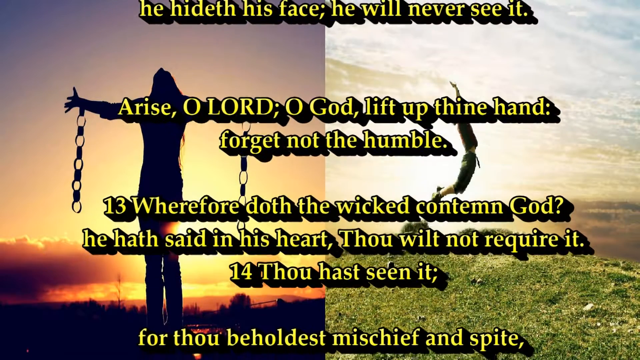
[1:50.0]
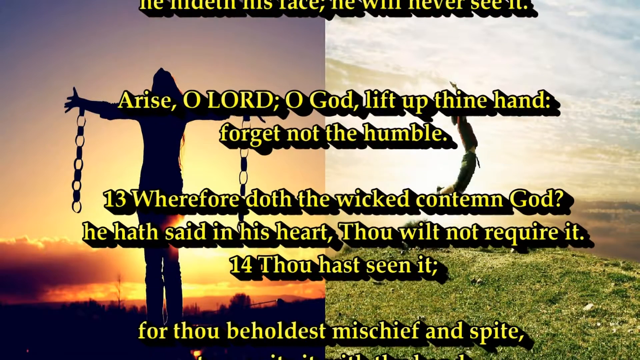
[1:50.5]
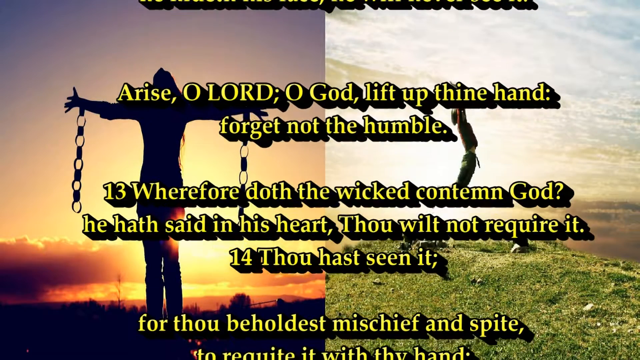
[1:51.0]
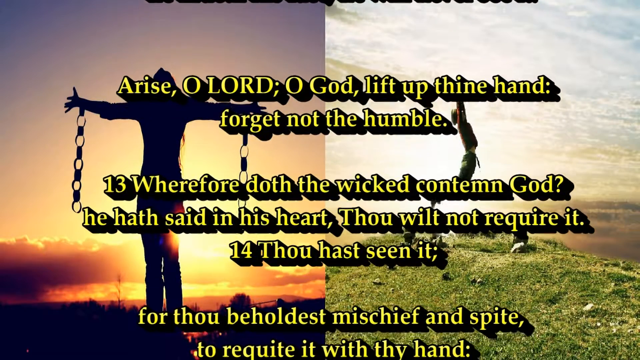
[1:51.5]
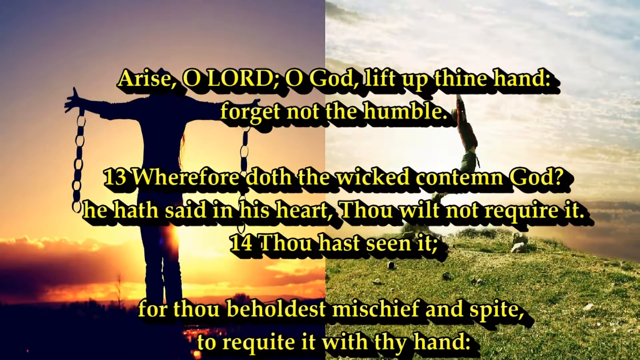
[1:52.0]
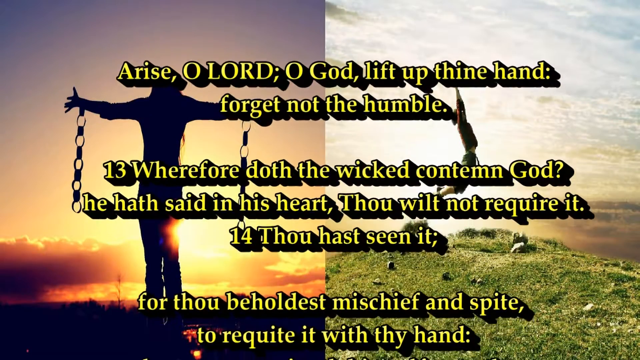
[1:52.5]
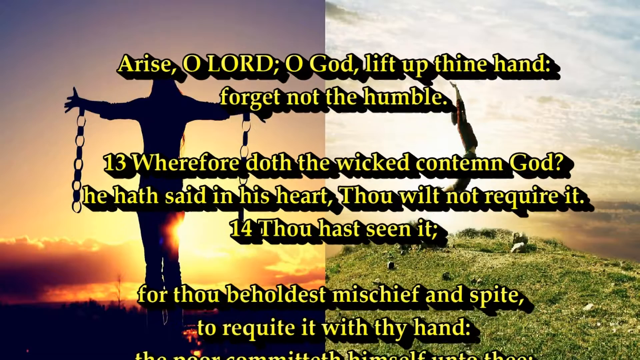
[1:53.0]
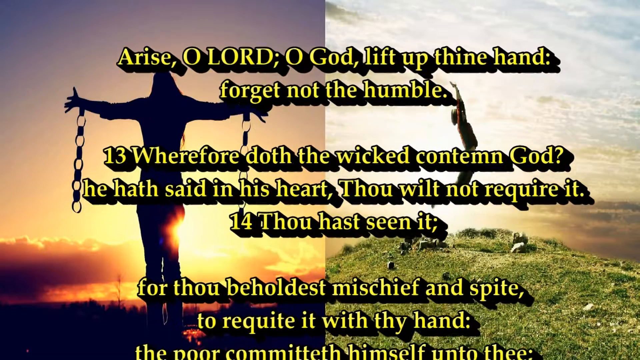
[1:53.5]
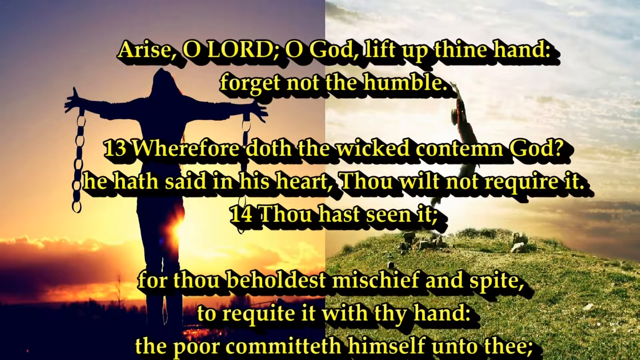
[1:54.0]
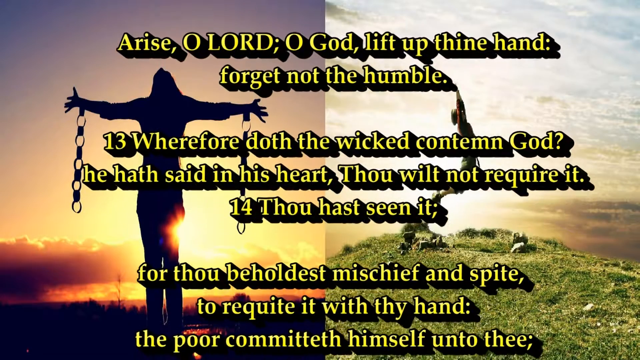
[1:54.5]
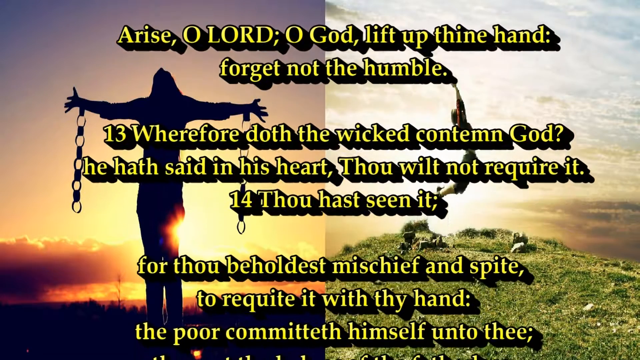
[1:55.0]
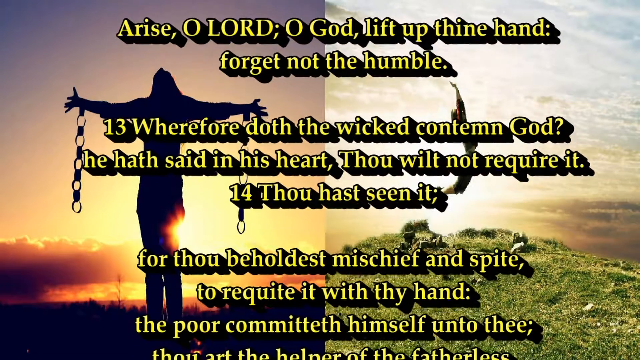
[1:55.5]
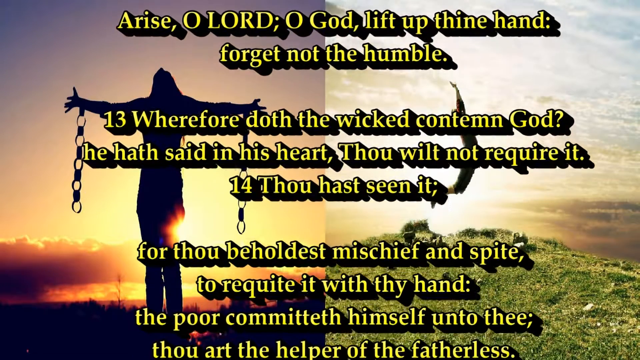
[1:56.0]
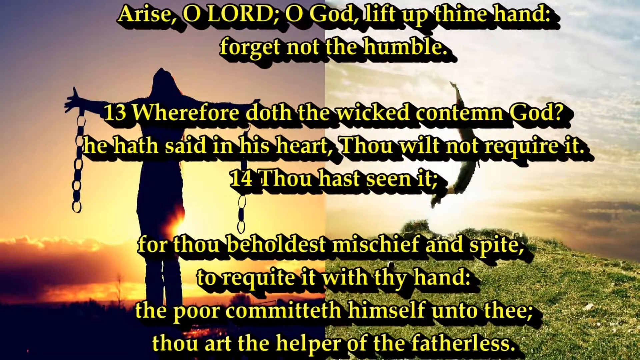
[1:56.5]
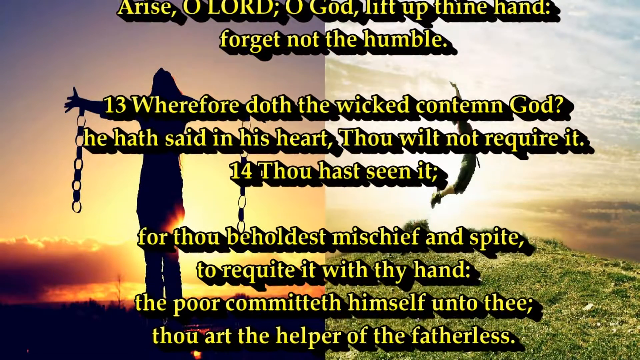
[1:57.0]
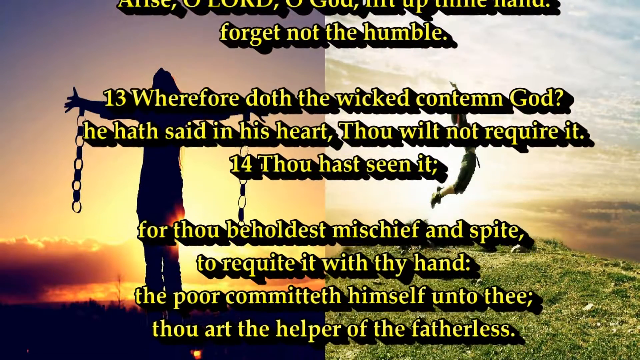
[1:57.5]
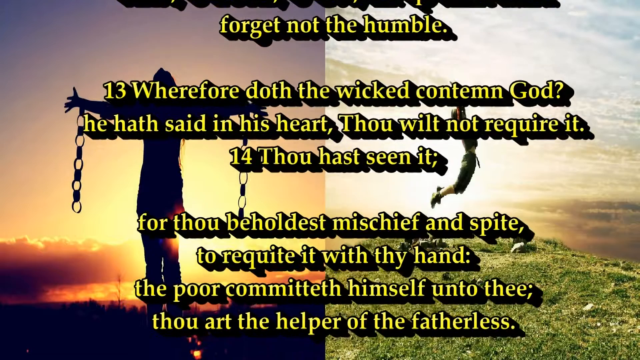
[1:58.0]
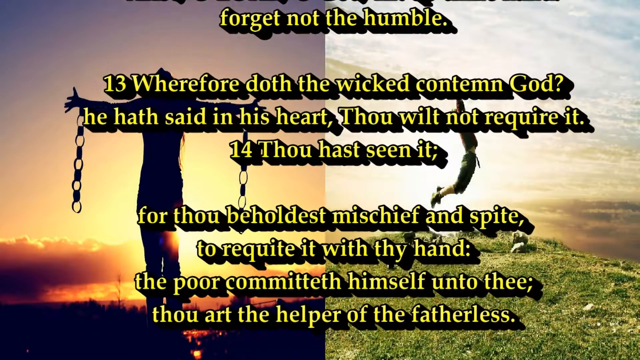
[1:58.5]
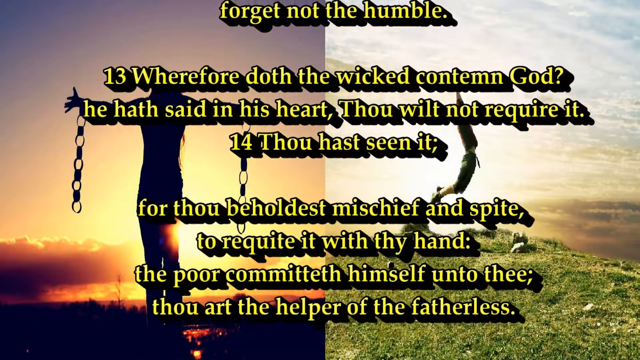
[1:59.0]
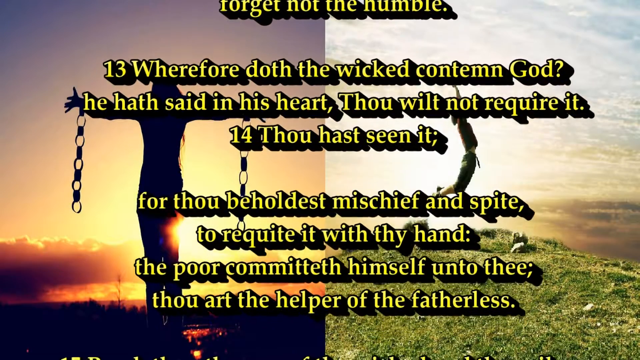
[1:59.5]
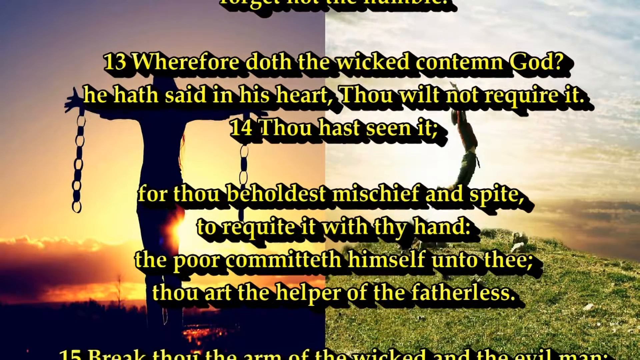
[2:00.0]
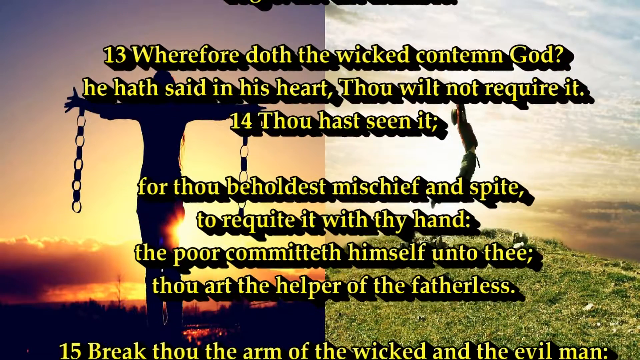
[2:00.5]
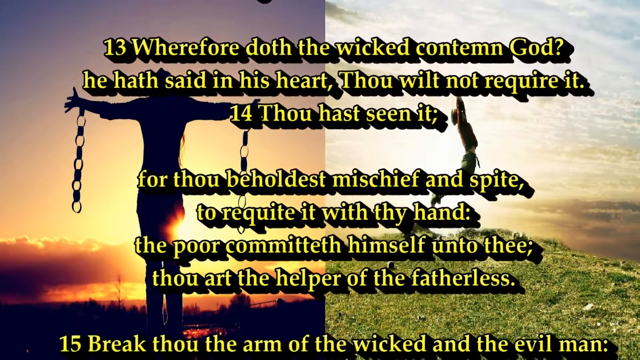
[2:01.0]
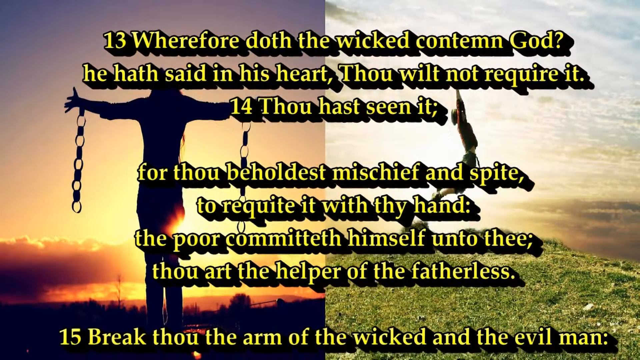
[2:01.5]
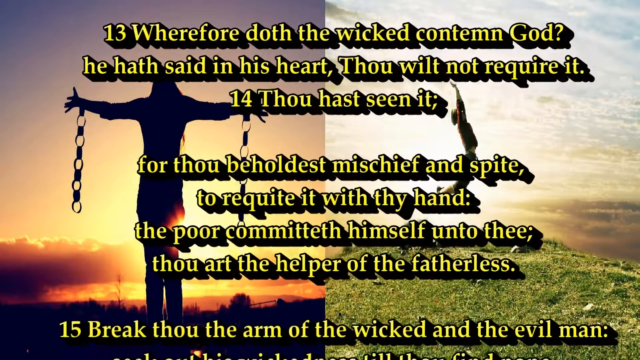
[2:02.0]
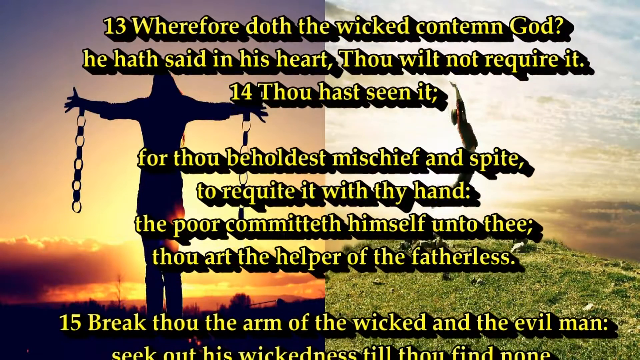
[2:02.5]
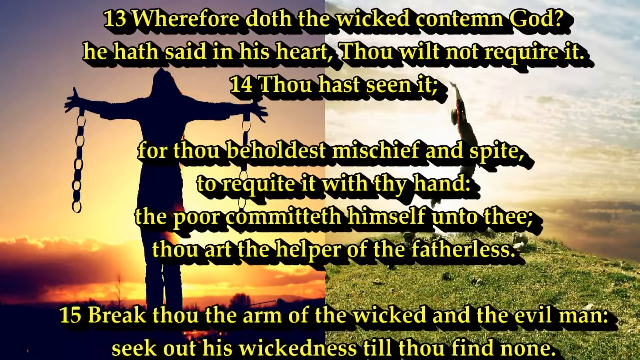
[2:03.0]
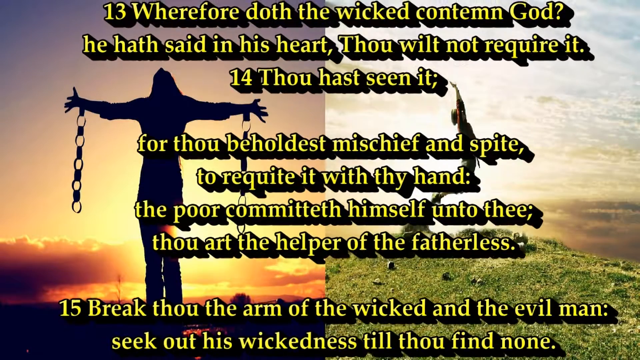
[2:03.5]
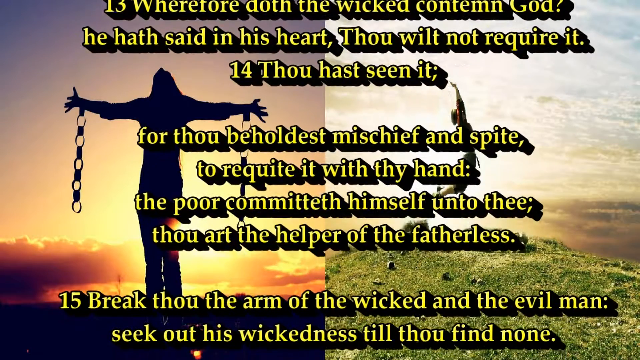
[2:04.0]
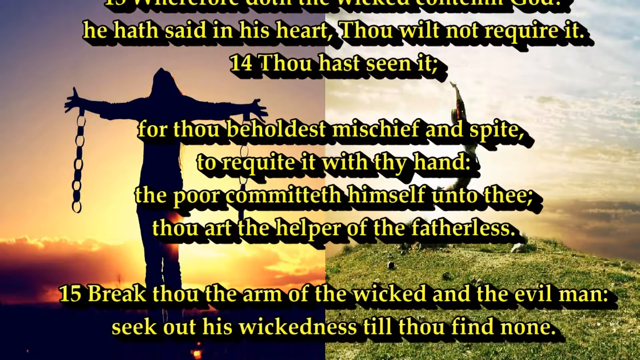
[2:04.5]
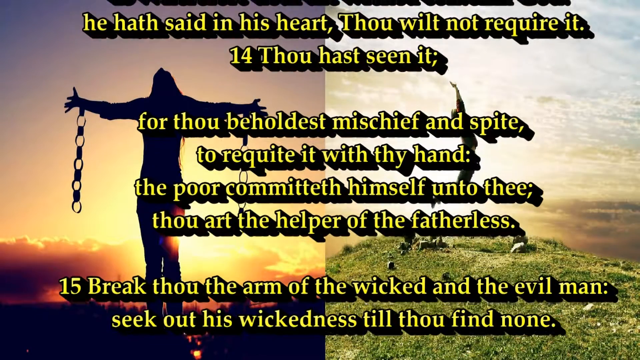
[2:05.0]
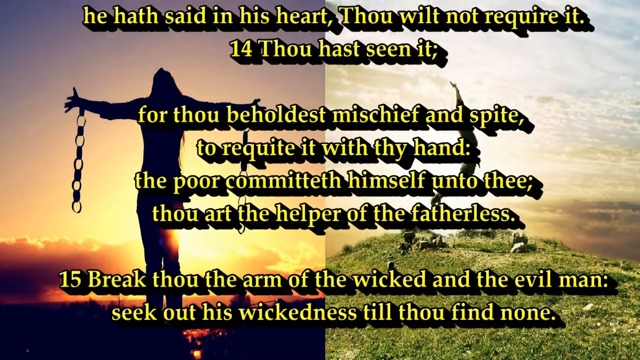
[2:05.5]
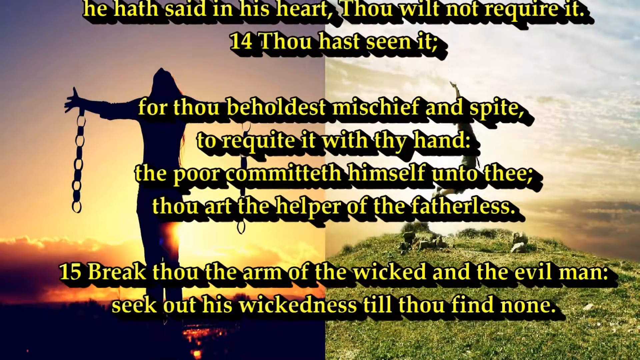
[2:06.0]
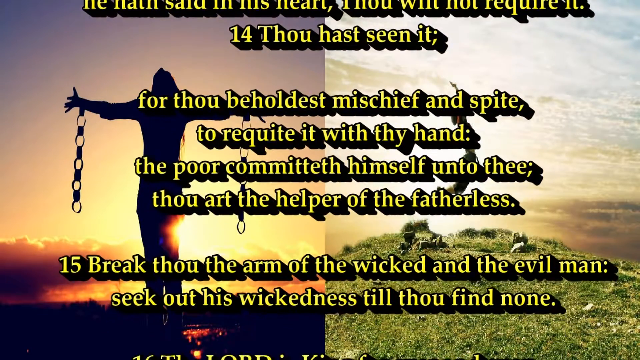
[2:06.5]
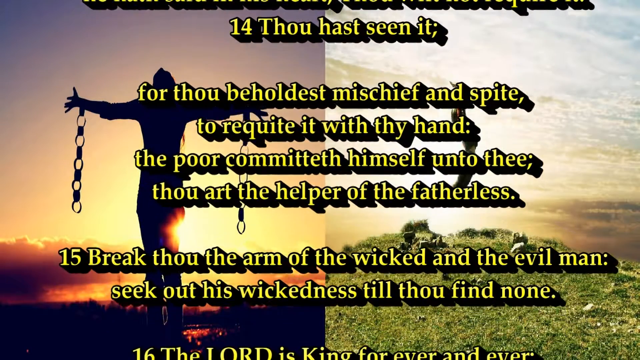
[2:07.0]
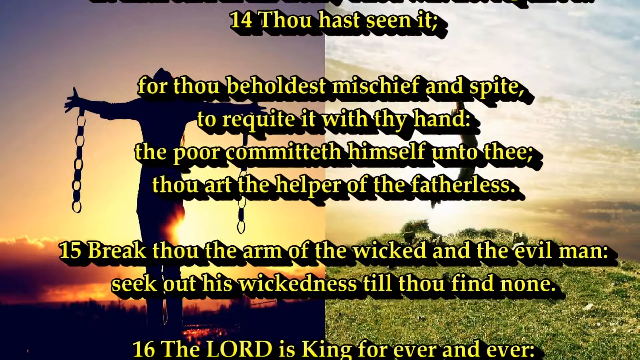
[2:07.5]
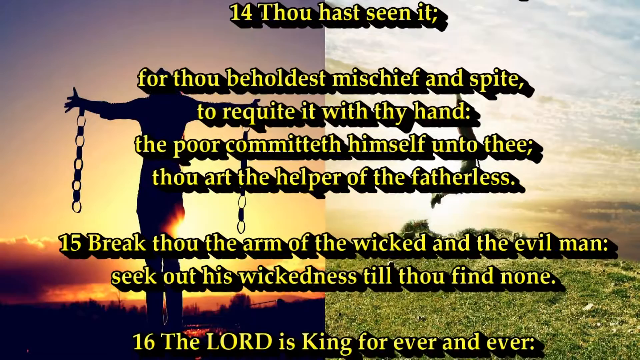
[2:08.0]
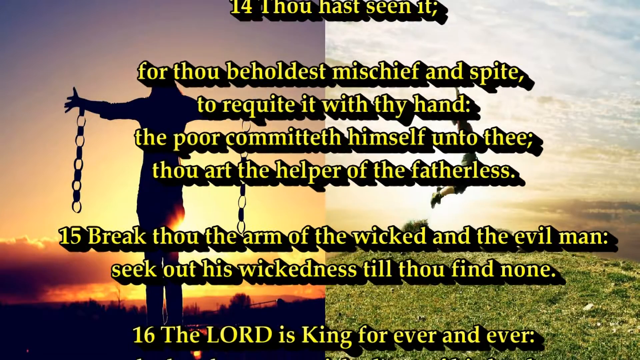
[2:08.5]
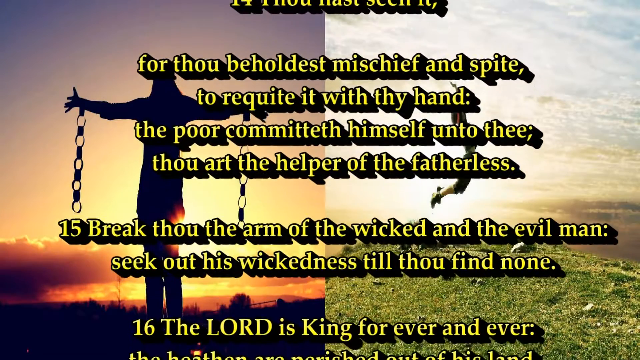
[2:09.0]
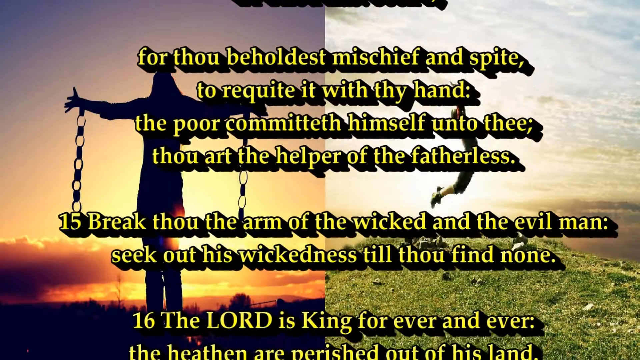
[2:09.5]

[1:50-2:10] The text begins at an unnumbered verse of Psalm 10 placed between verse 11 and the later verses, apparently verse 12, reading "arise oh lord oh god lift up thine hand forget not the humble." Verses 13 and 14 follow, with verse 14 including "The poor committed himself unto thee." Next comes "Break through the arm of the wicked and the evil," and the text carries on to verses 15, 16 and 17, written in yellow. The background shows a tall man standing with his arms open.